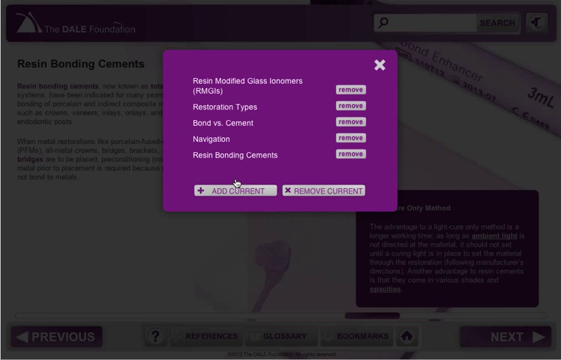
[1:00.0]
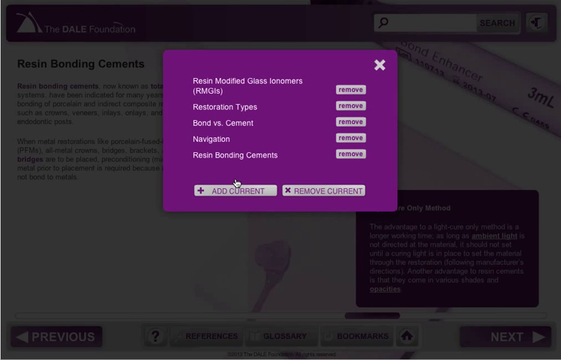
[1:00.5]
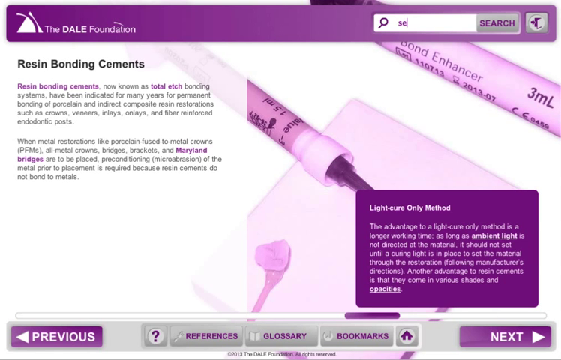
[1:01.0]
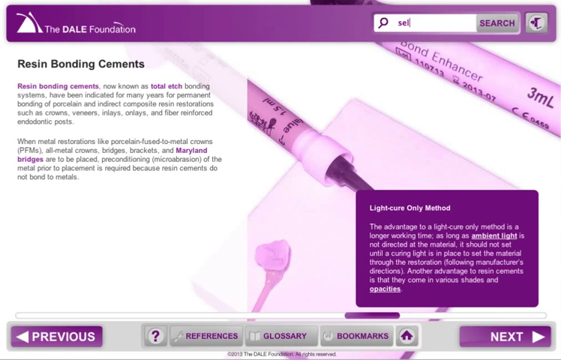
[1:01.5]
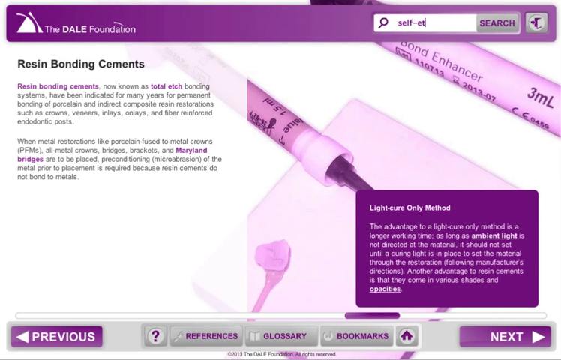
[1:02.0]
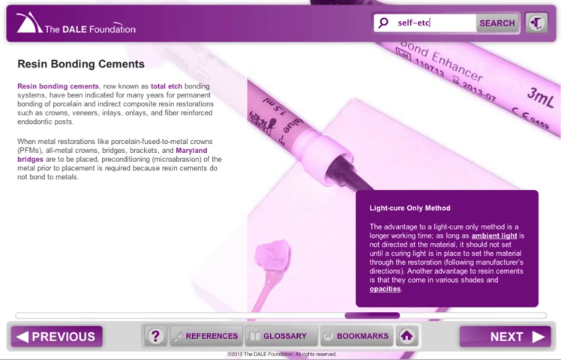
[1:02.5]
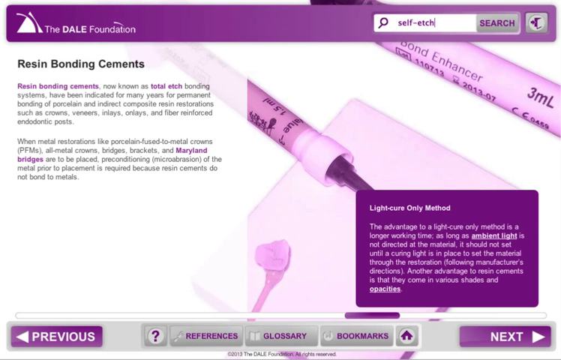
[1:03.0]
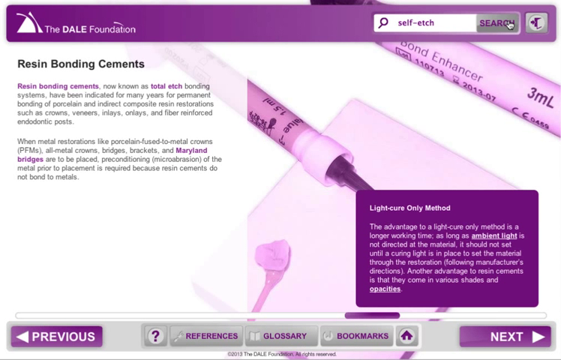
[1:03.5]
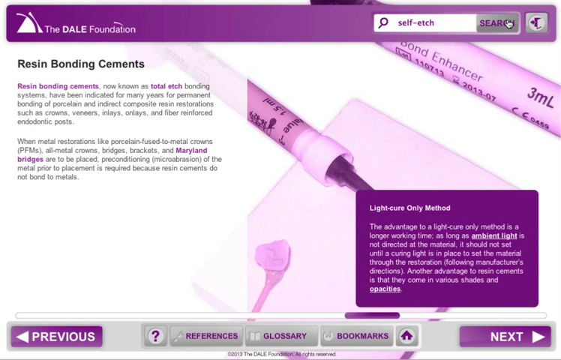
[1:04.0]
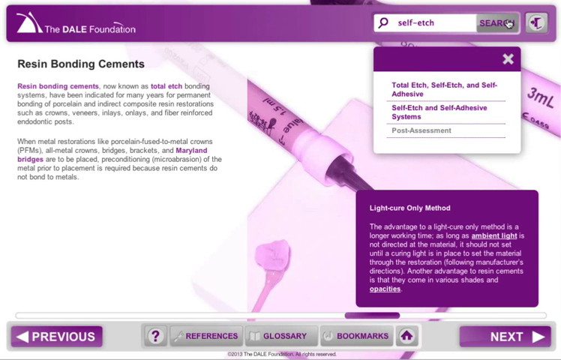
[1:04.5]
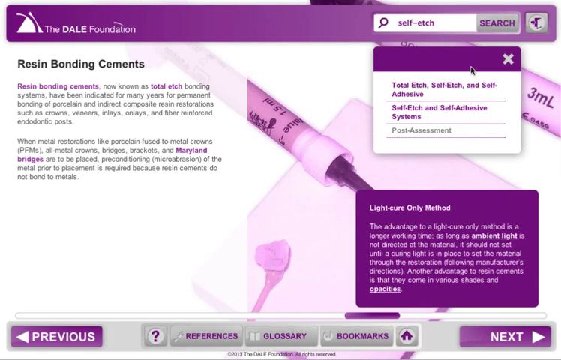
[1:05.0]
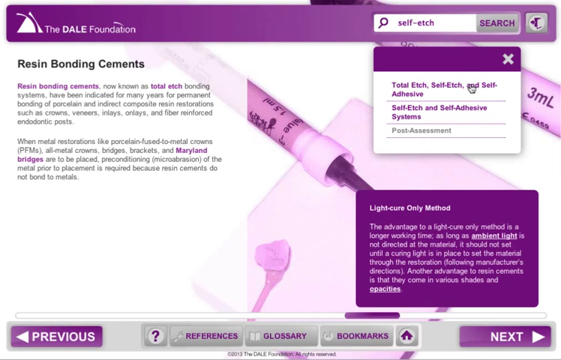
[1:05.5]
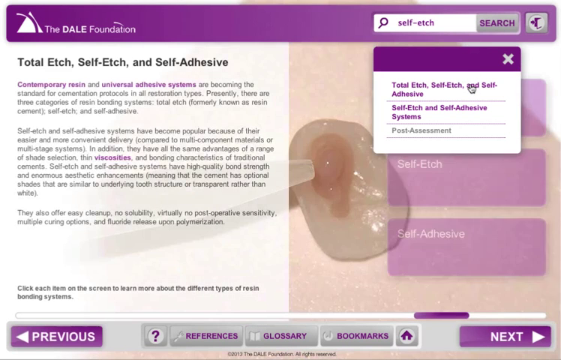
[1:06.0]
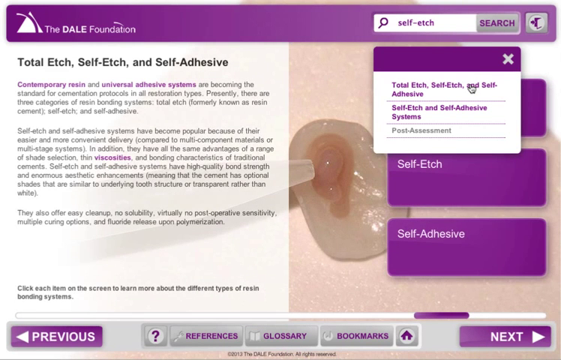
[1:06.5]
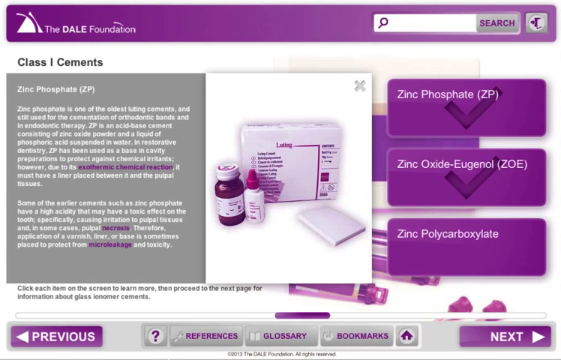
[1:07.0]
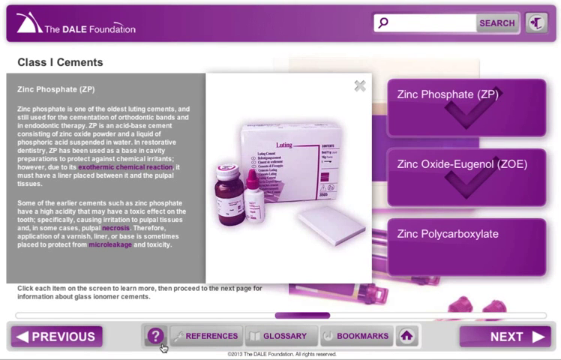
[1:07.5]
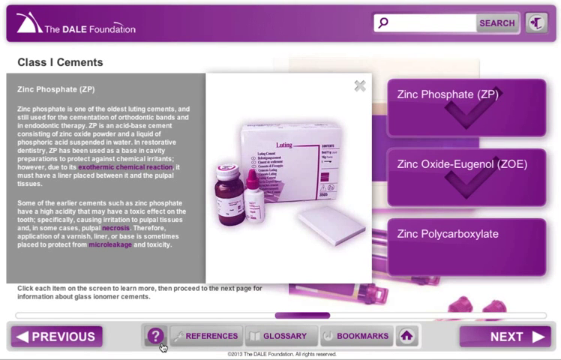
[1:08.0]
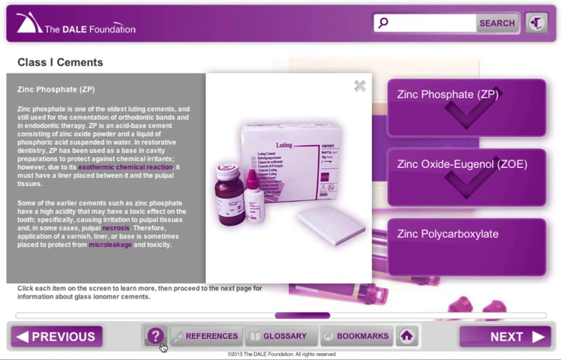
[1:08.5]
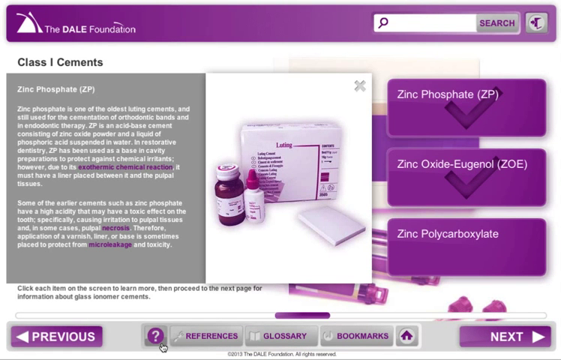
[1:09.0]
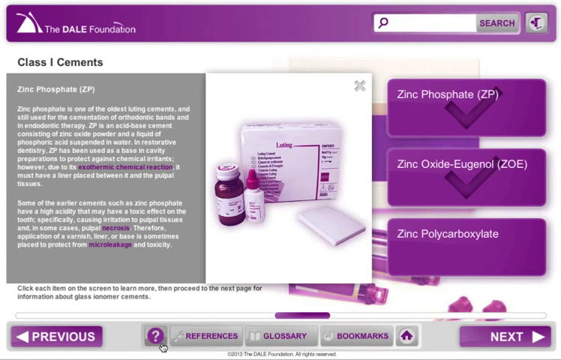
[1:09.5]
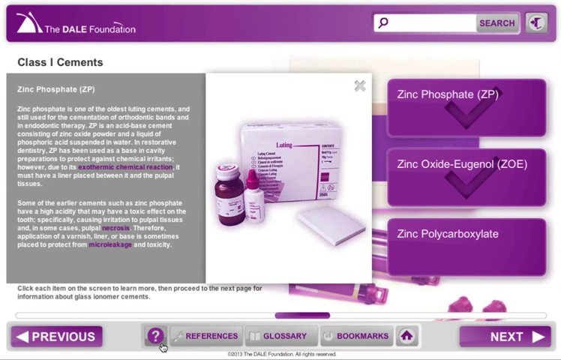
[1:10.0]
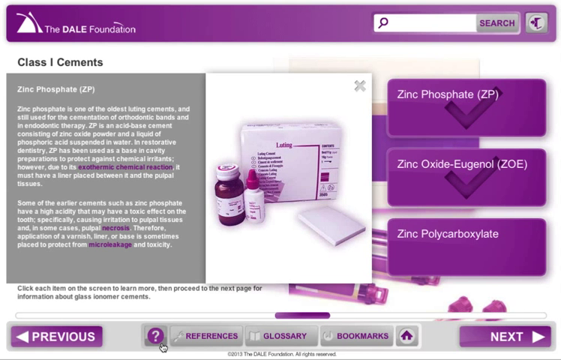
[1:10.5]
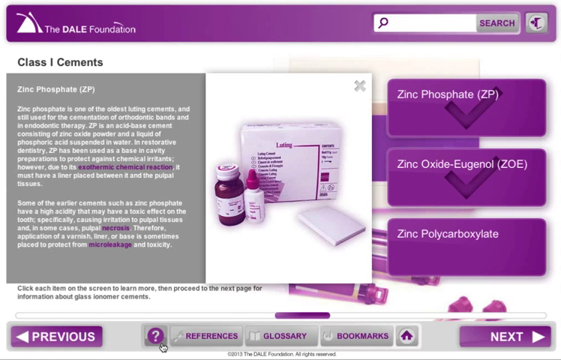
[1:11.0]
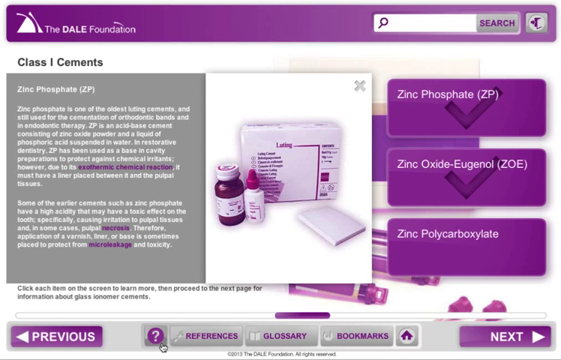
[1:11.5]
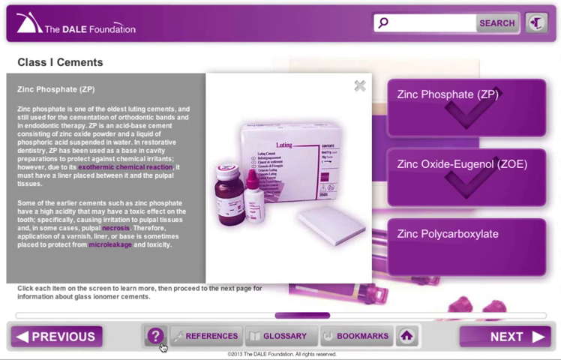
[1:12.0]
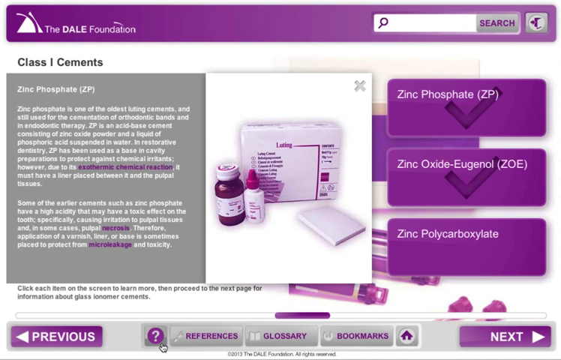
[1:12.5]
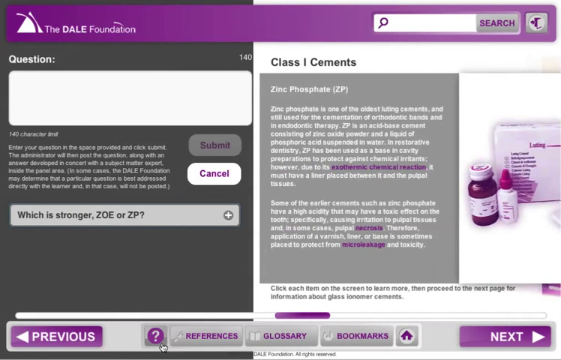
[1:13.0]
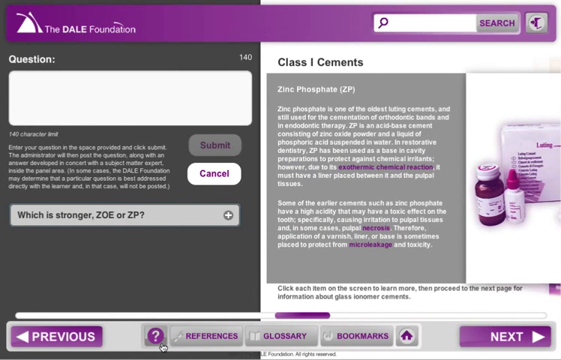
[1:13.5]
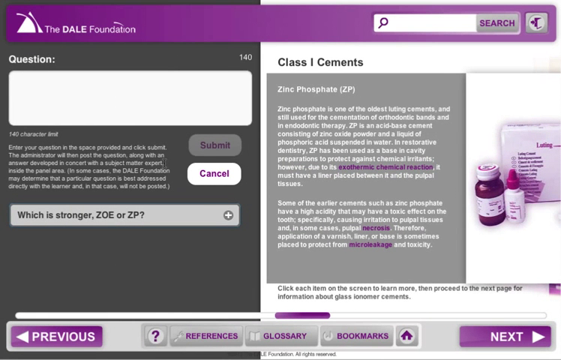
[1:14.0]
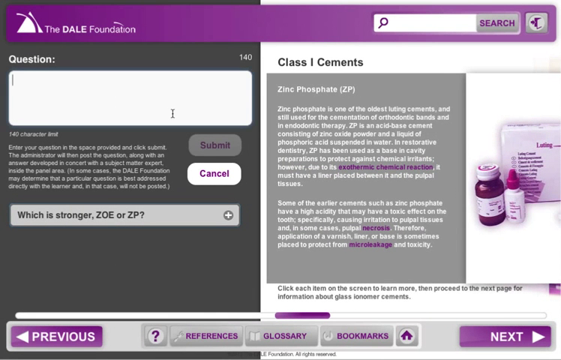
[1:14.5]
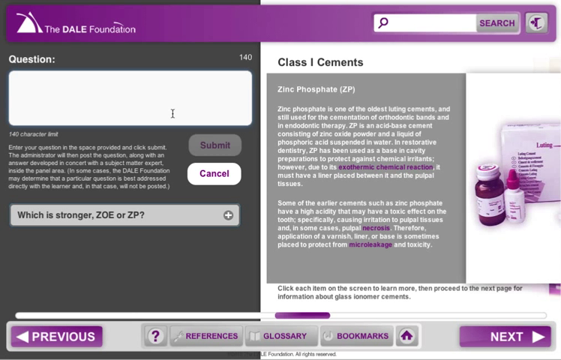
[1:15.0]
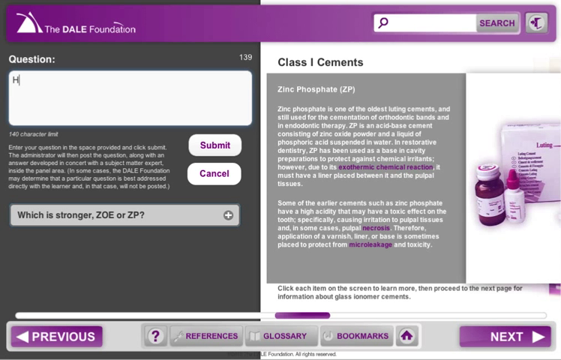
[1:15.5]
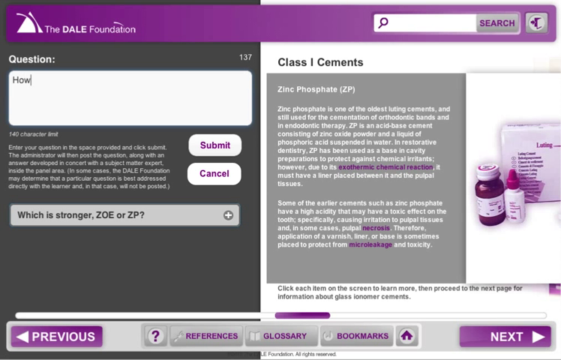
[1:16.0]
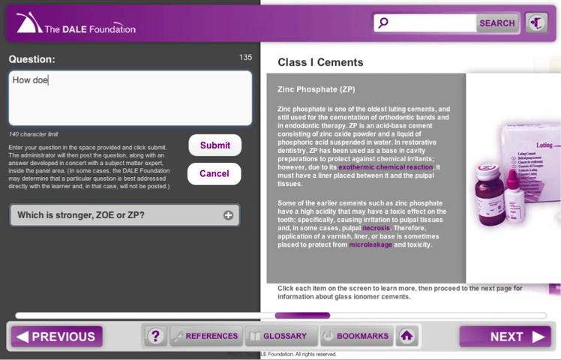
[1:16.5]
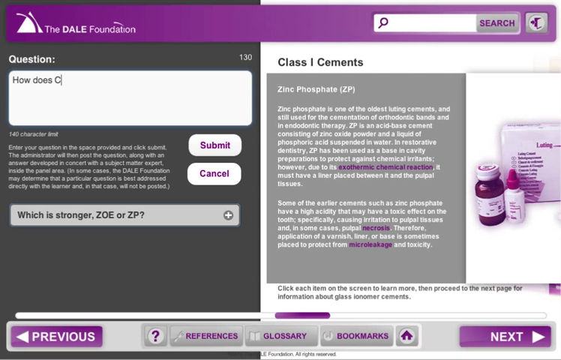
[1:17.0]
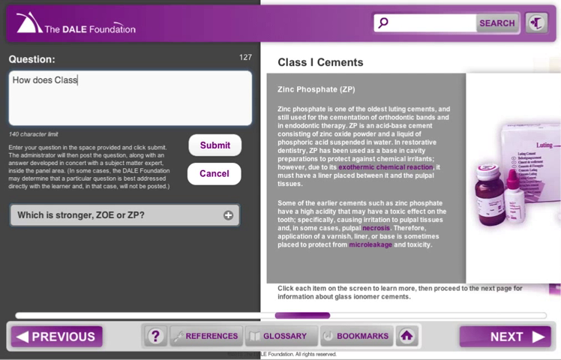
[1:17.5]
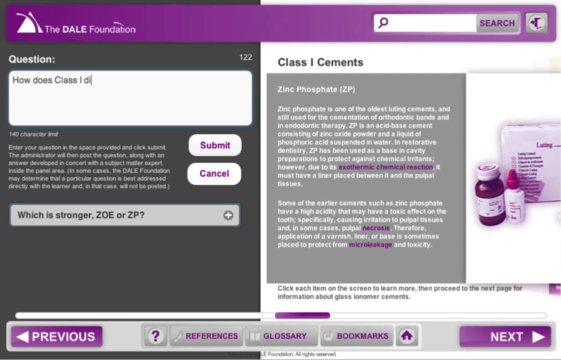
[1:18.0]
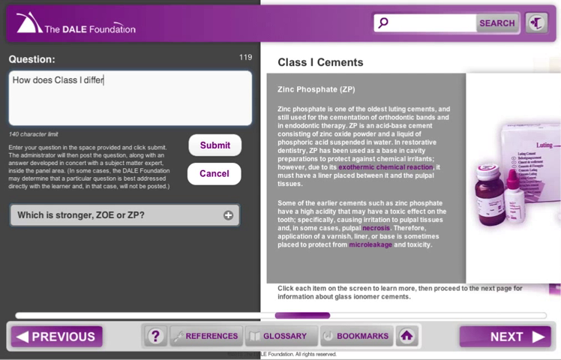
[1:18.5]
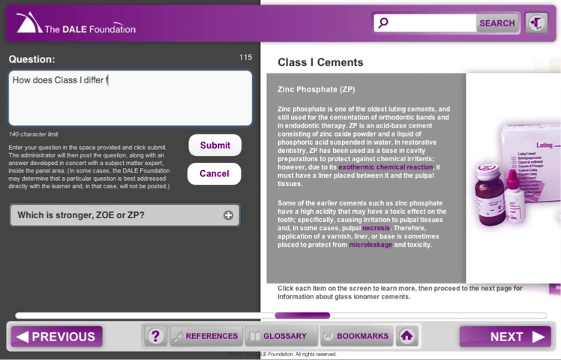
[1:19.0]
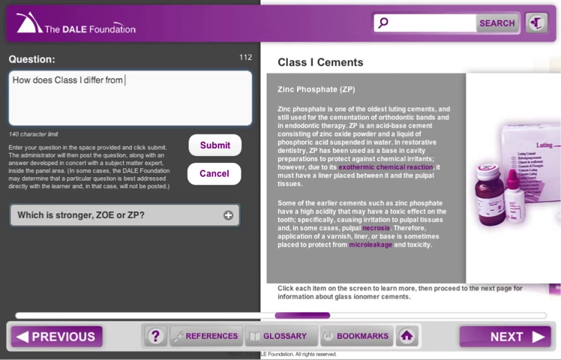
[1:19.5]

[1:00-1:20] Another interactive section shows that hovering over words written in purple brings up more information about them. The person recording types "self-etch" into the search bar and clicks search, bringing up a drop-down listing total etch, self-etch and self-adhesive or self-etch and self-adhesive systems, and post-assessment. The person clicks the top result, which leads to a screen about class cements with information on zinc phosphate underneath. On the right are text boxes that look clickable, reading "zinc phosphate", "zinc oxide", "eugenol" and "zinc polycarboxylate". In the middle of the screen is an image that looks like some kind of medicines related to the class one cements. A question box then appears in the left-hand corner, with a 140-character limit; as the person types, the character count in the right corner decreases. The question reads "how does class one differ?"